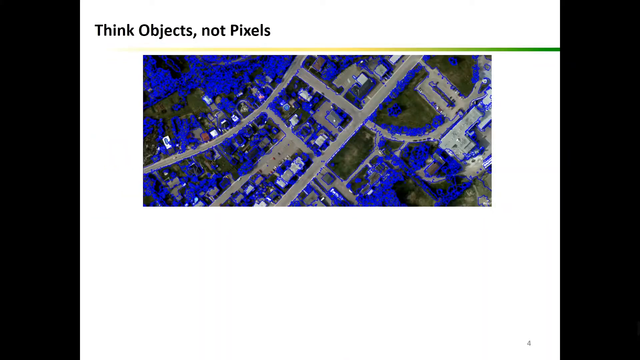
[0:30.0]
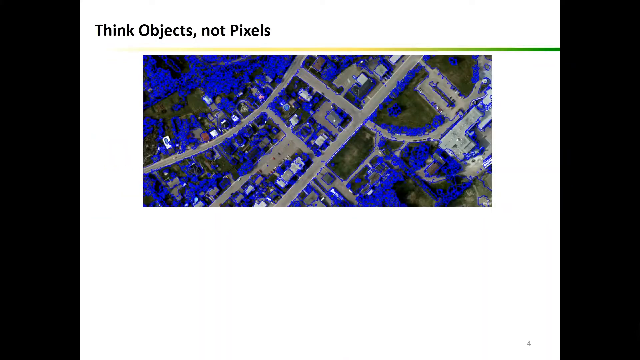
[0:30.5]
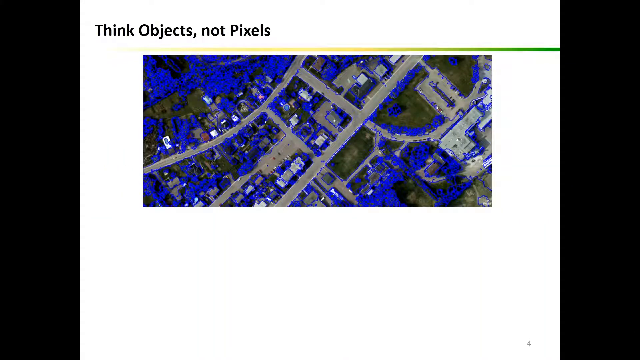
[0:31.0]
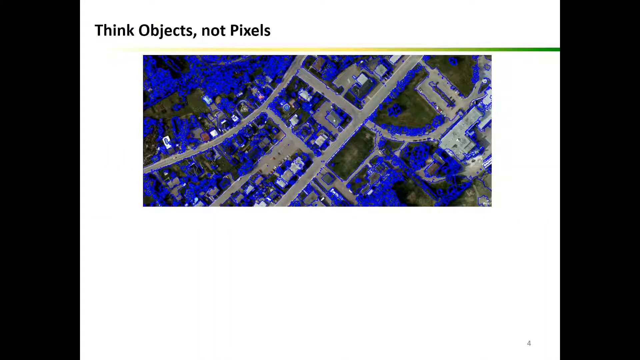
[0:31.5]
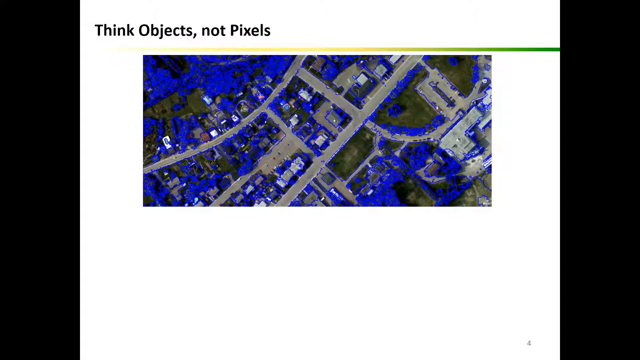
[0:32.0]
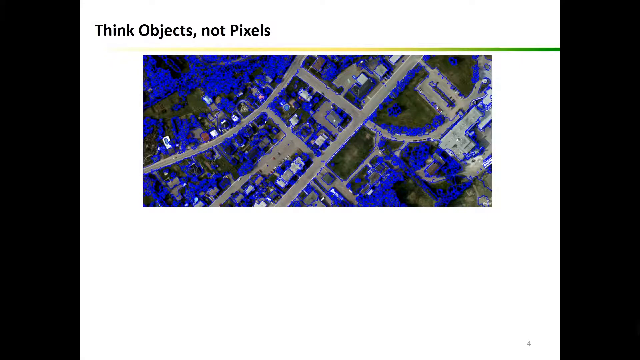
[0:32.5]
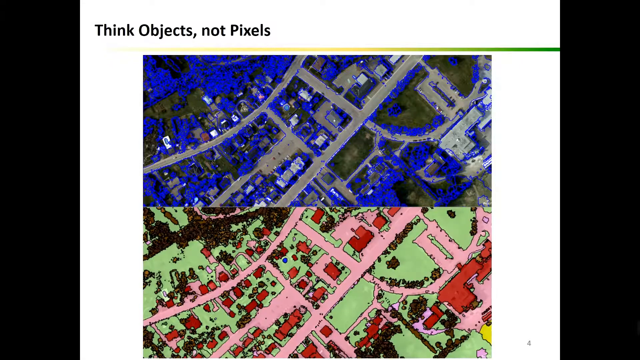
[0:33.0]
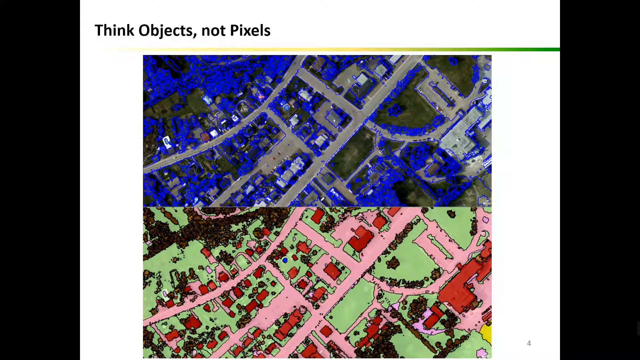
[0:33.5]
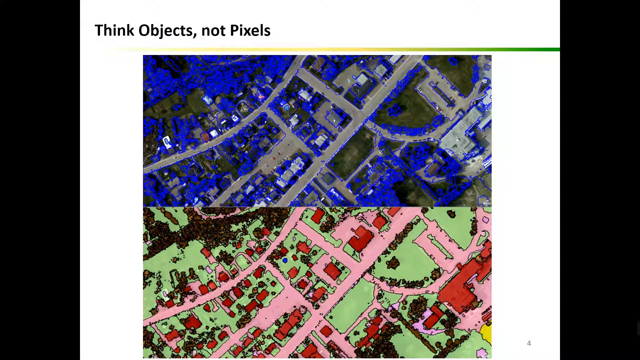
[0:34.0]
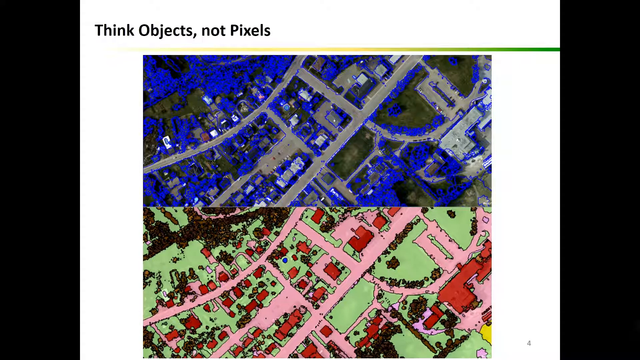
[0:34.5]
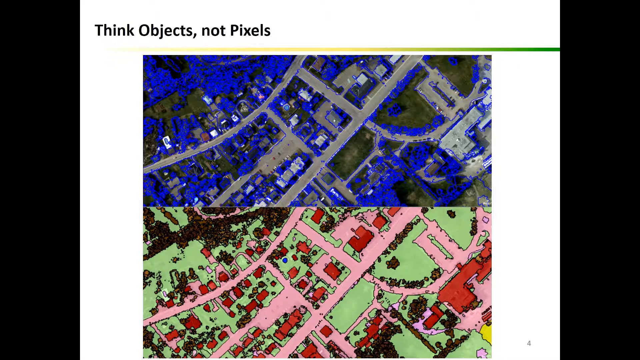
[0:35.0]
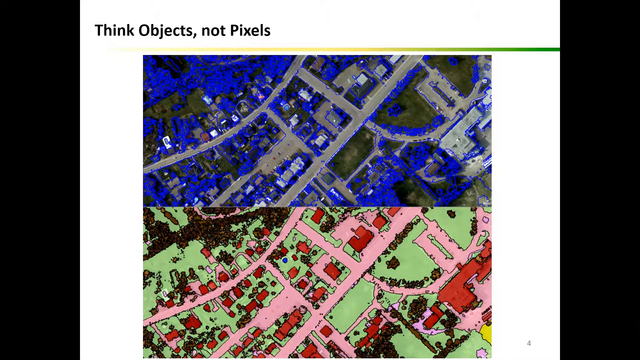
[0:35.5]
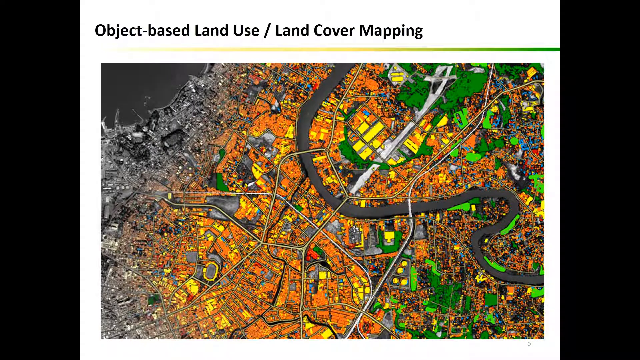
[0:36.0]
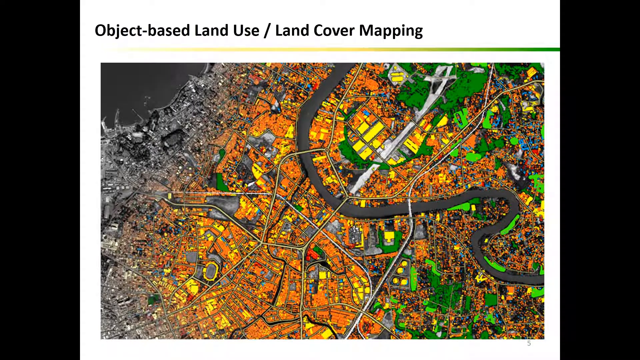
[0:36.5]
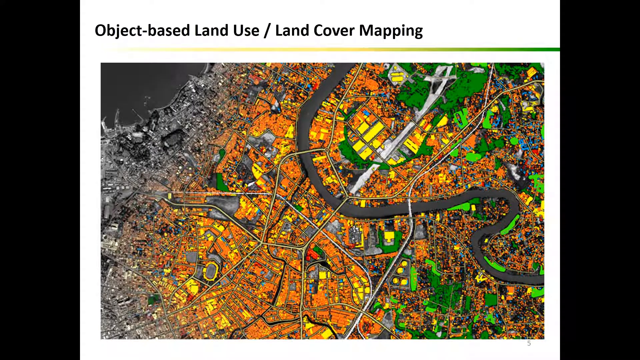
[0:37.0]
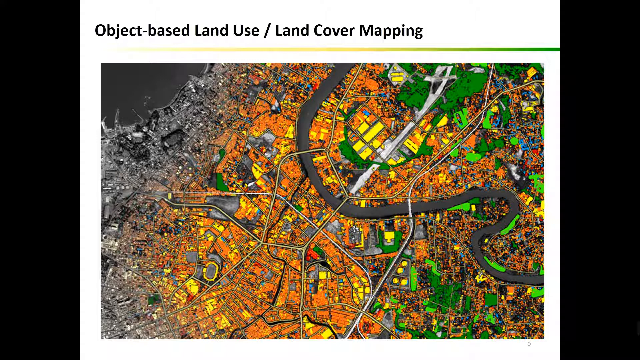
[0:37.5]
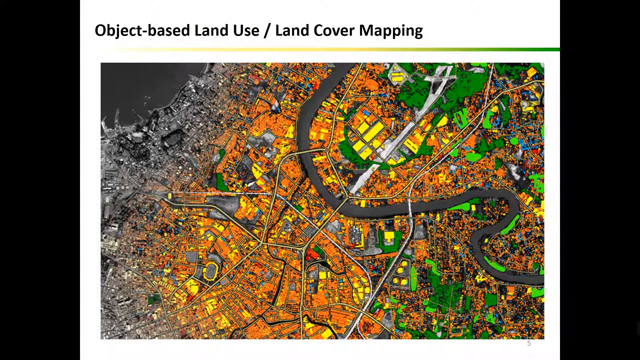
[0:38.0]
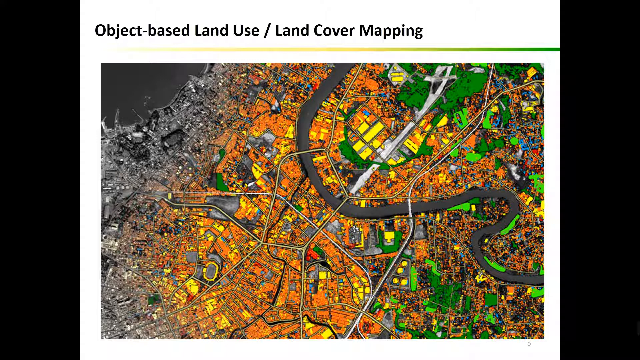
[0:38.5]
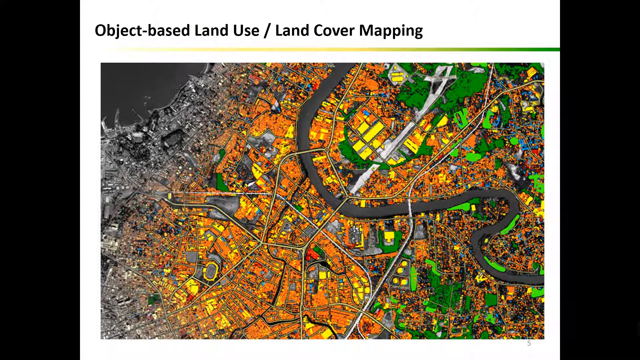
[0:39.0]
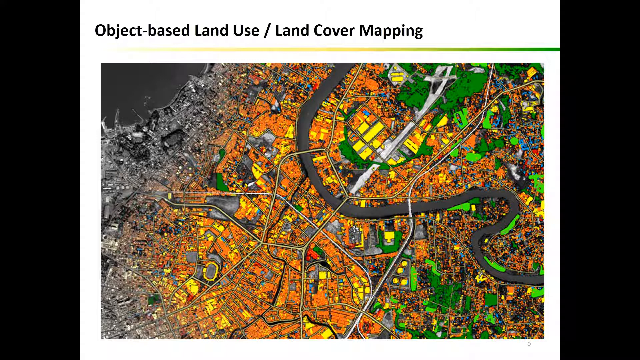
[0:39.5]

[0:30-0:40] Two aerial views of a landmass are shown, presumably within the course's software, showing features on the land such as waterways and roads. The first image is much closer to the ground and shows individual plots or parcels with buildings on them in different colors, perhaps representing different materials such as concrete, wood or asphalt. The second image is pulled much higher up and shows a city area, perhaps with a river running through it, with roads, connectors and many buildings and parcels. The city looks very congested and appears to be at the edge of a large waterway, perhaps even an ocean. This image is also in many different colors that presumably correspond to different things on the land.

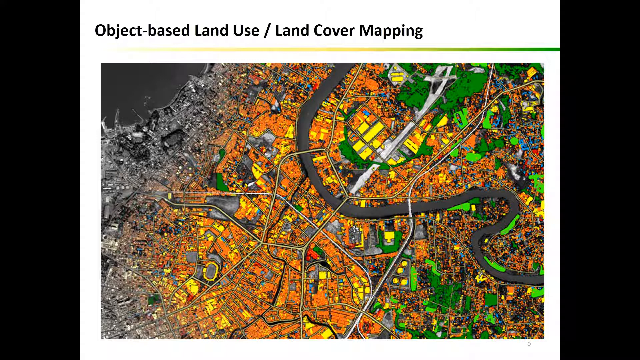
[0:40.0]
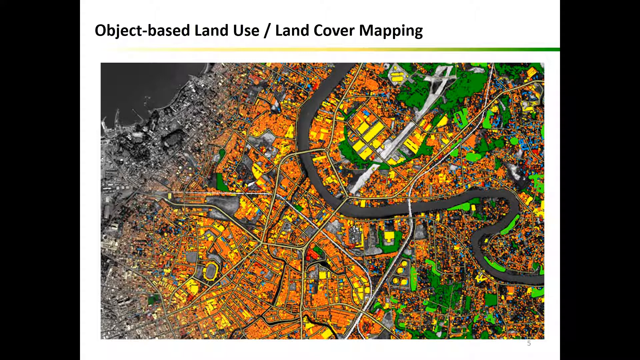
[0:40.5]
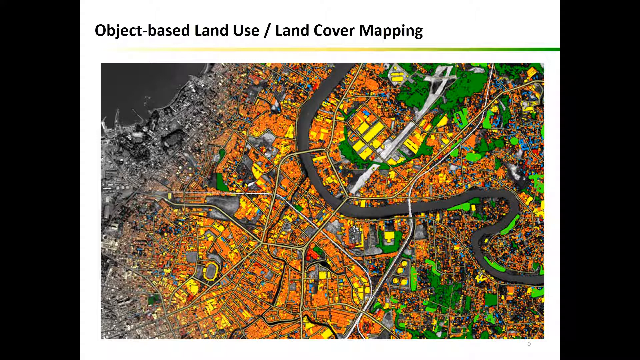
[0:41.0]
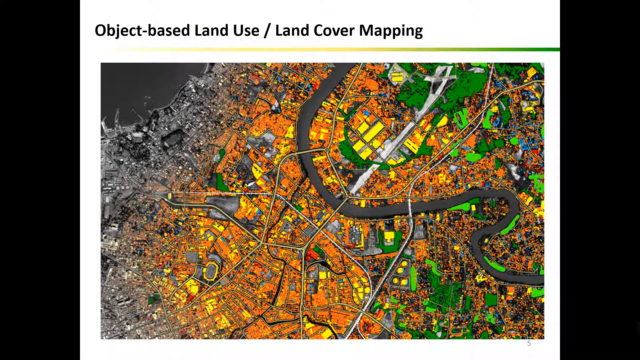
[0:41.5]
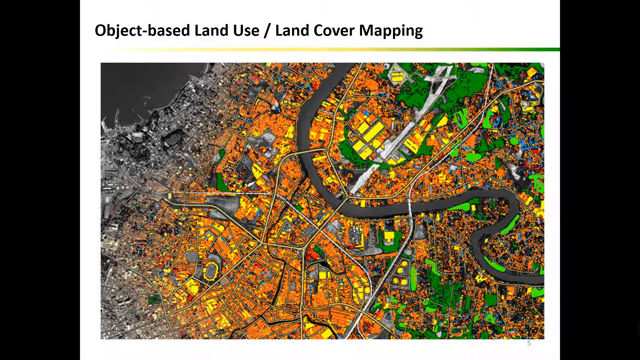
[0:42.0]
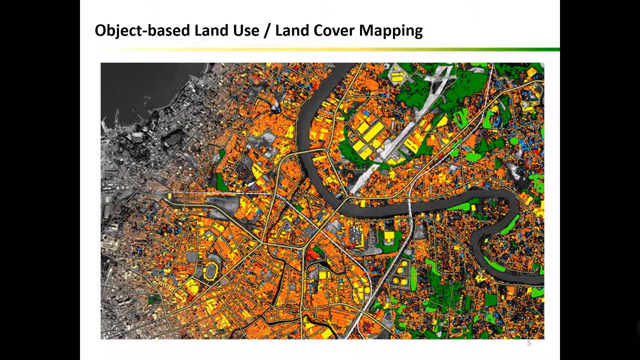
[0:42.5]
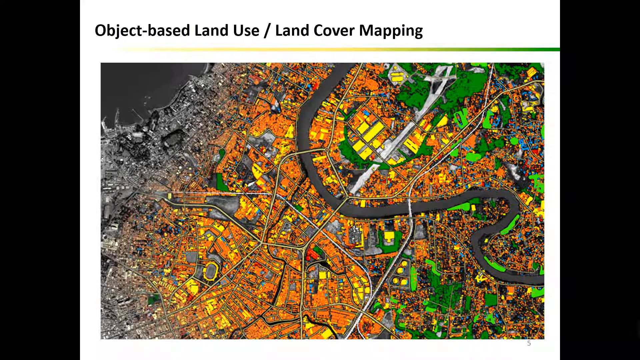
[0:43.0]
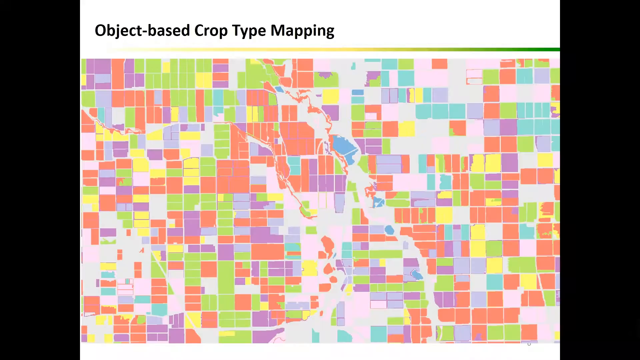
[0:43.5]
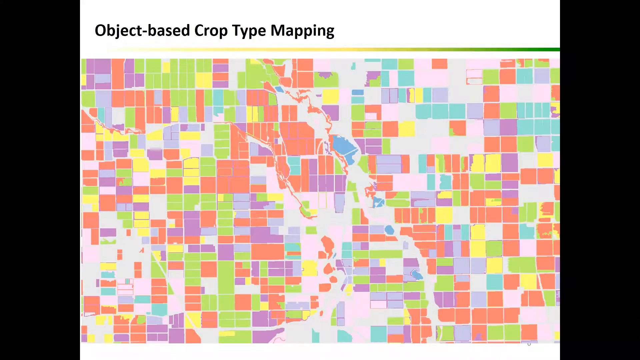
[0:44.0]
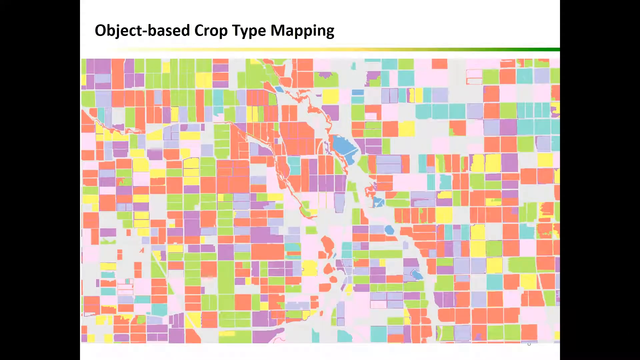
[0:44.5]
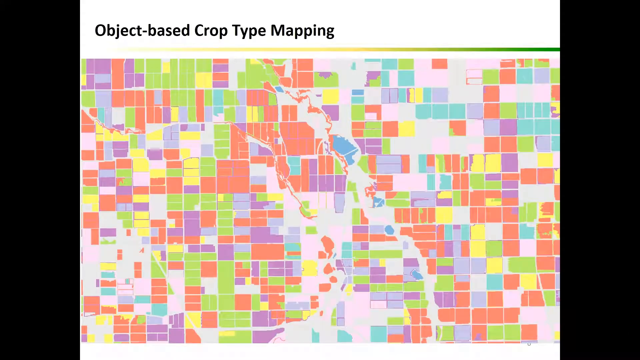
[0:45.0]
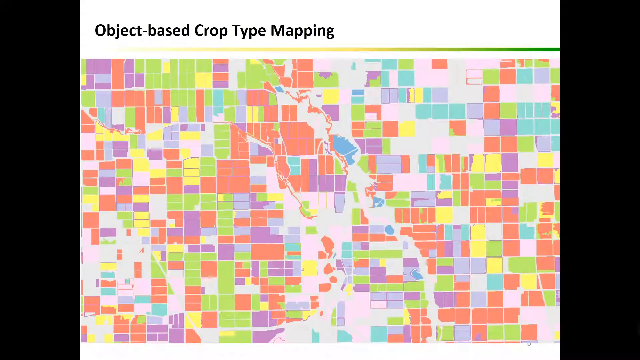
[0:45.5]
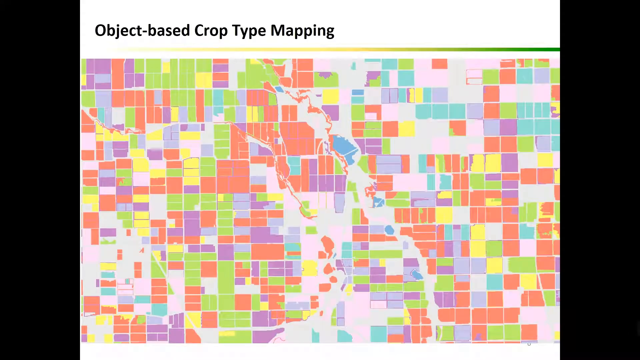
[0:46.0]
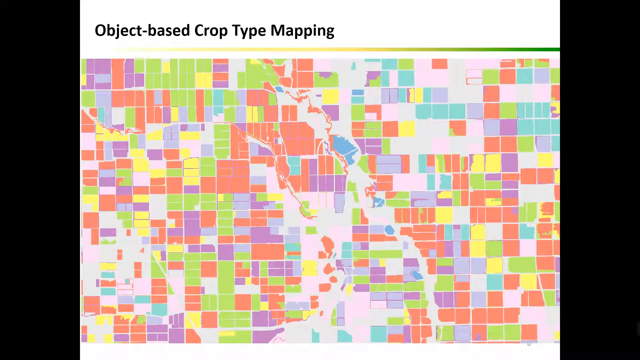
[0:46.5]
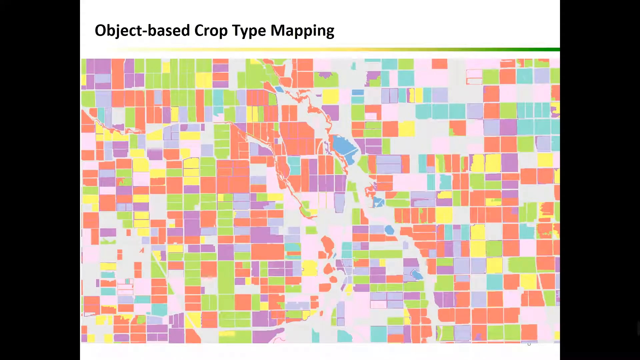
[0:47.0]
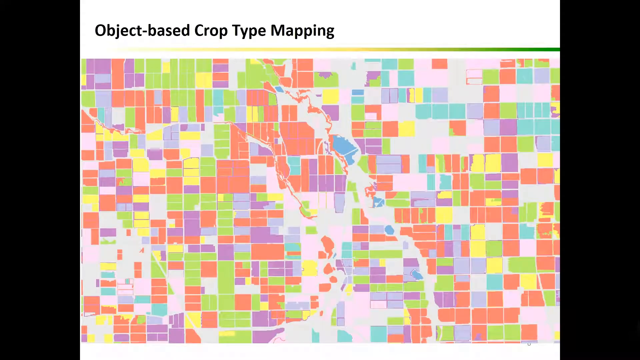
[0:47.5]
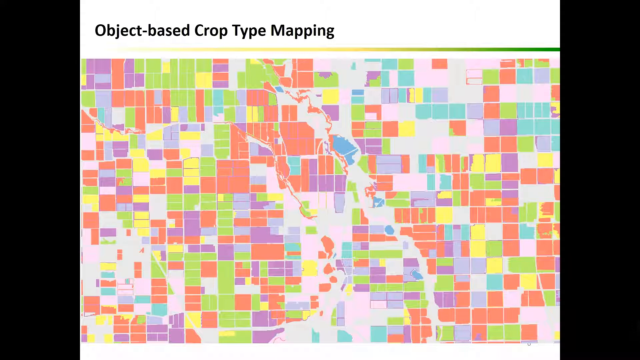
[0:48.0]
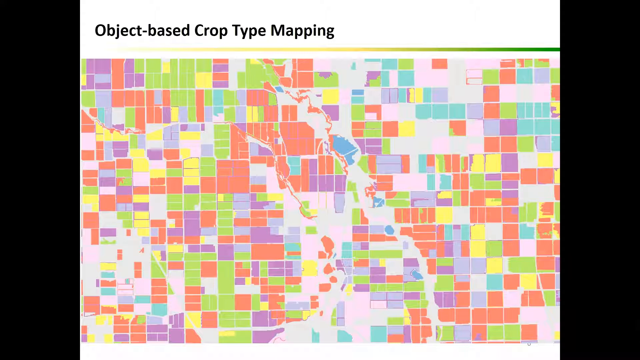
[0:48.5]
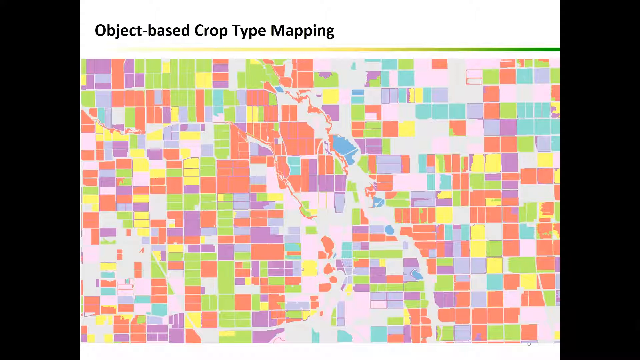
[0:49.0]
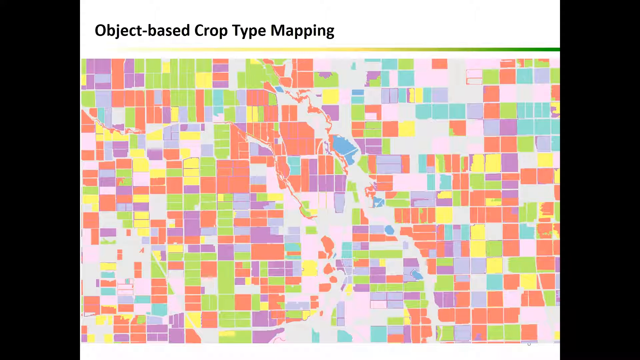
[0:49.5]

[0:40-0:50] The heading shows "object-based land use" and "object-based crop type mapping." The first image, for land use, is the aerial view of the city. The video then moves to object-based crop type mapping, which shows a different color for each parcel of land, perhaps all agricultural land with each color indicating a different crop grown there.